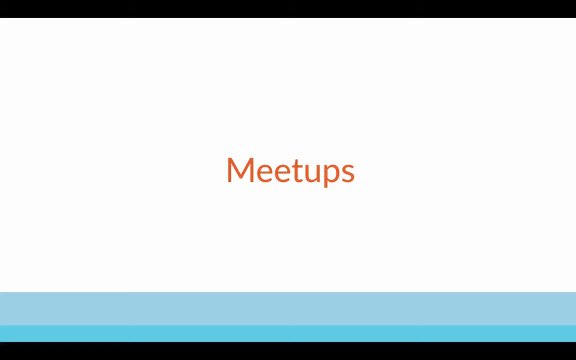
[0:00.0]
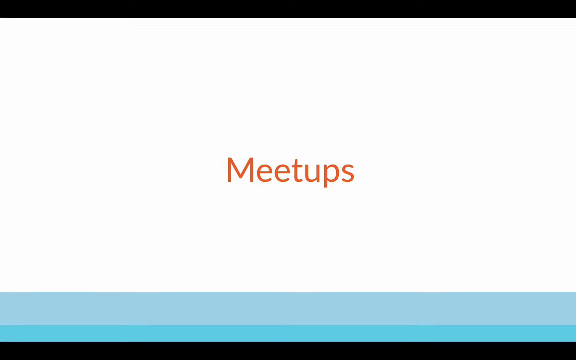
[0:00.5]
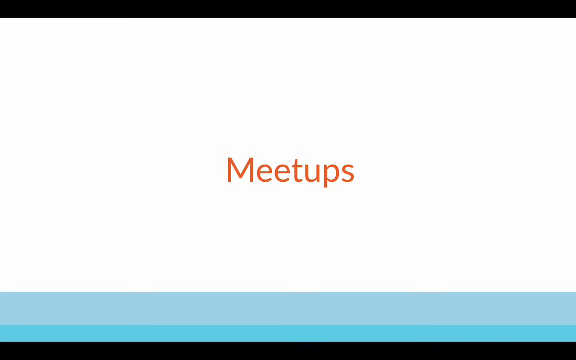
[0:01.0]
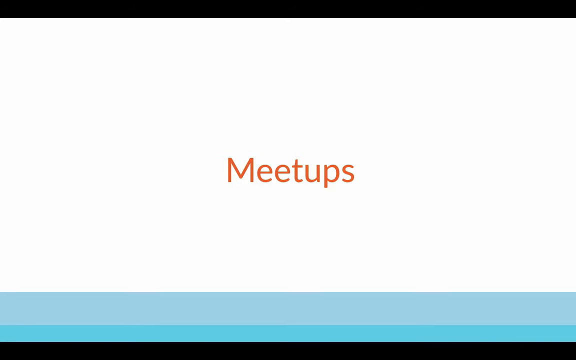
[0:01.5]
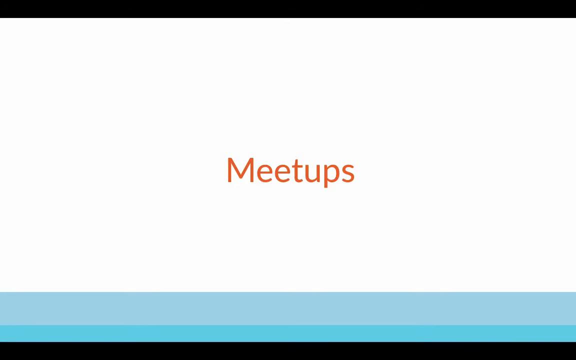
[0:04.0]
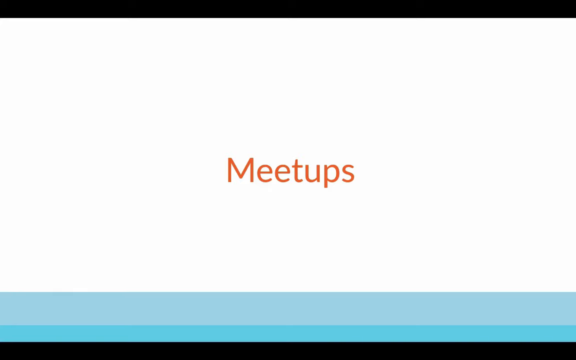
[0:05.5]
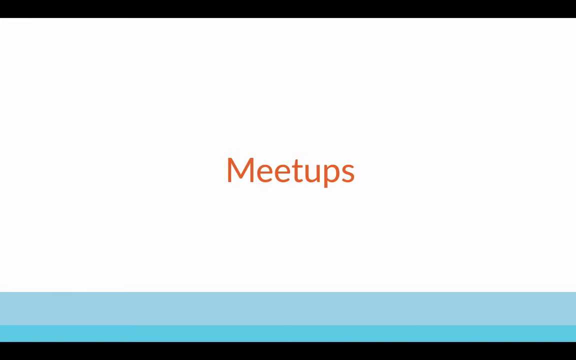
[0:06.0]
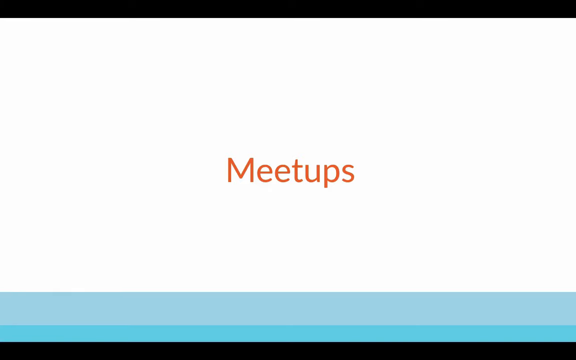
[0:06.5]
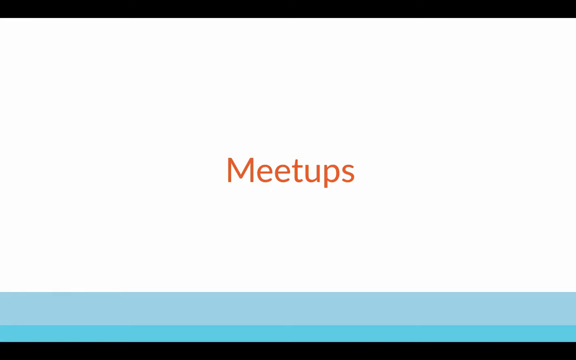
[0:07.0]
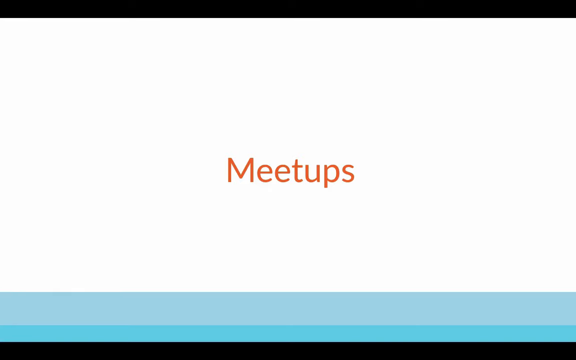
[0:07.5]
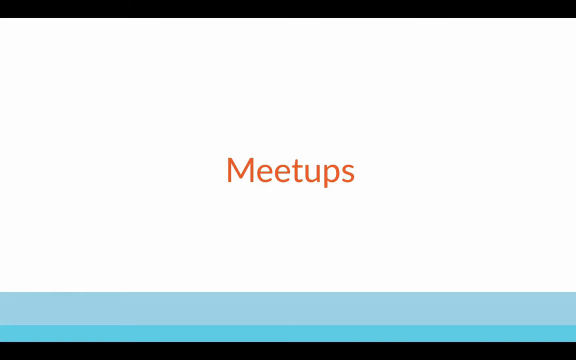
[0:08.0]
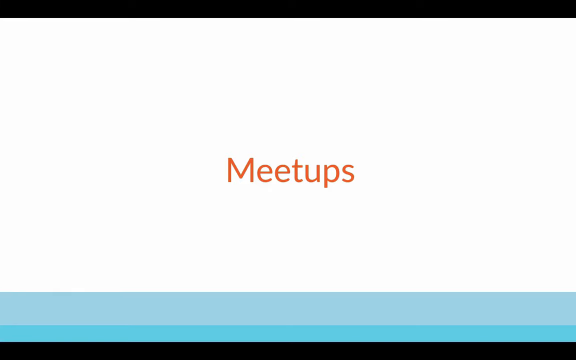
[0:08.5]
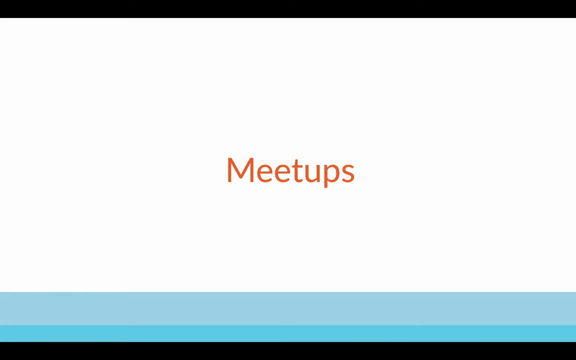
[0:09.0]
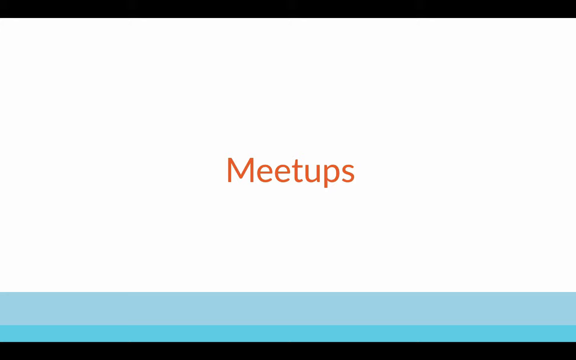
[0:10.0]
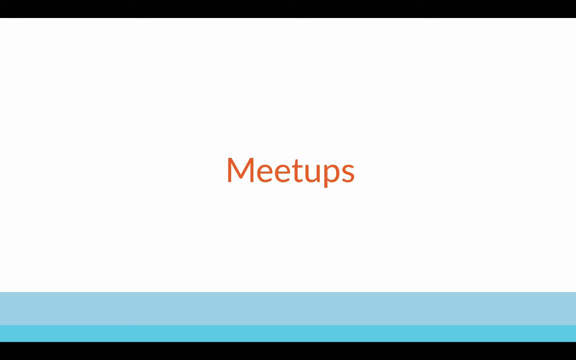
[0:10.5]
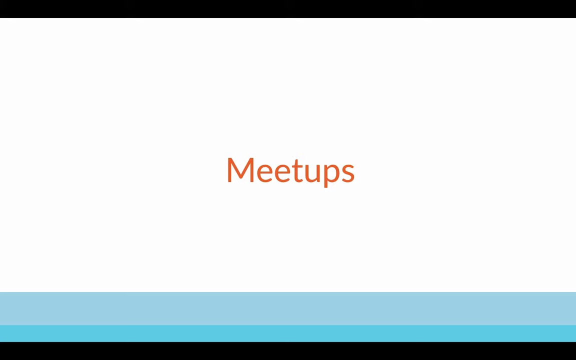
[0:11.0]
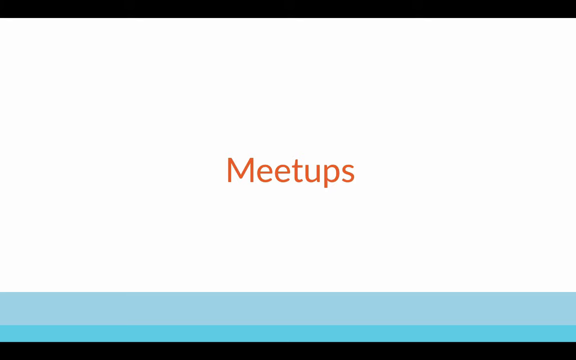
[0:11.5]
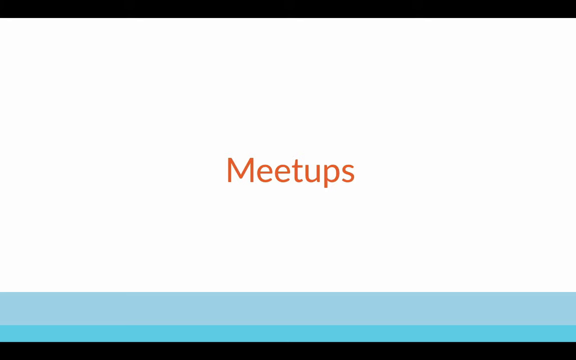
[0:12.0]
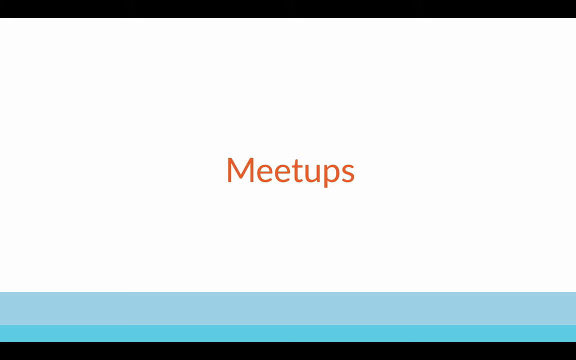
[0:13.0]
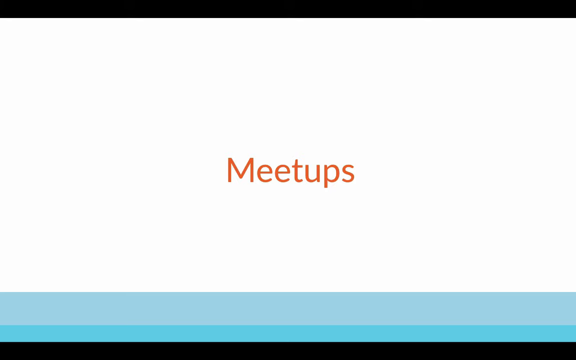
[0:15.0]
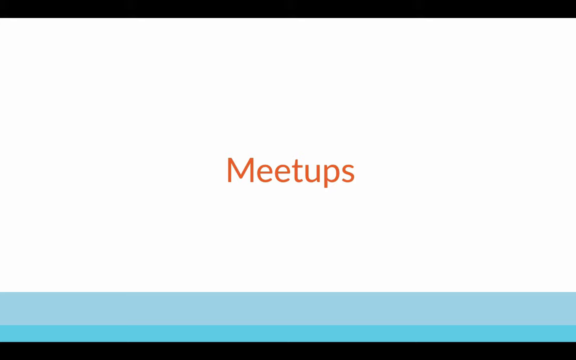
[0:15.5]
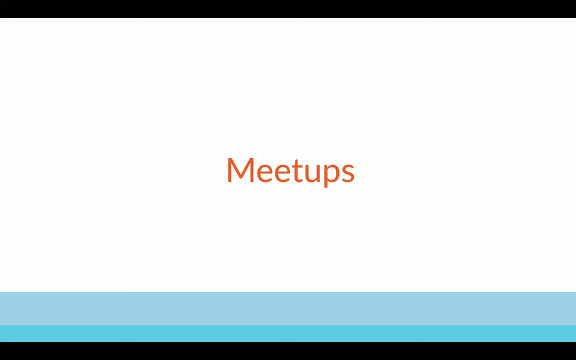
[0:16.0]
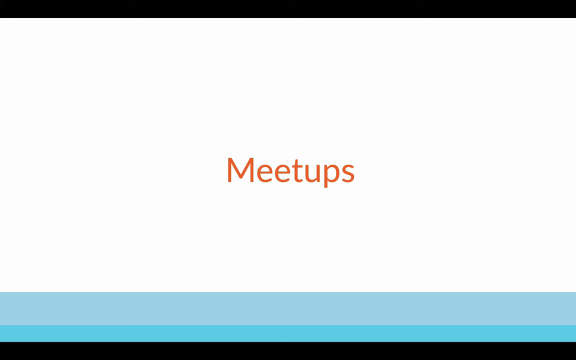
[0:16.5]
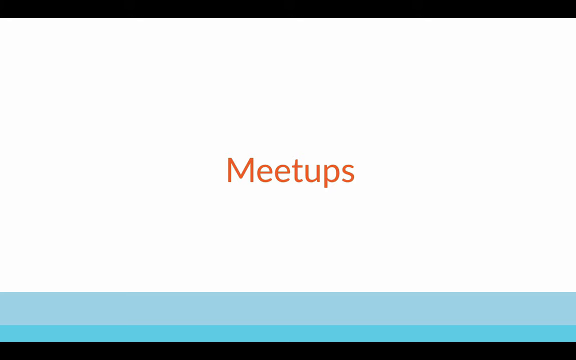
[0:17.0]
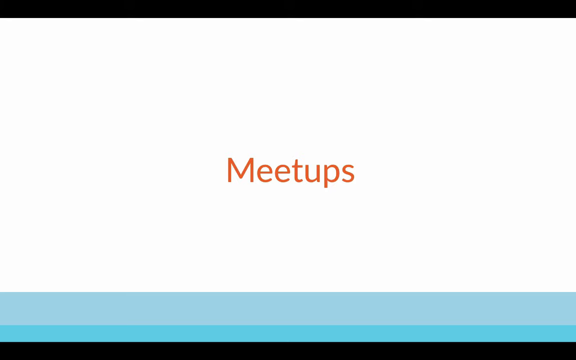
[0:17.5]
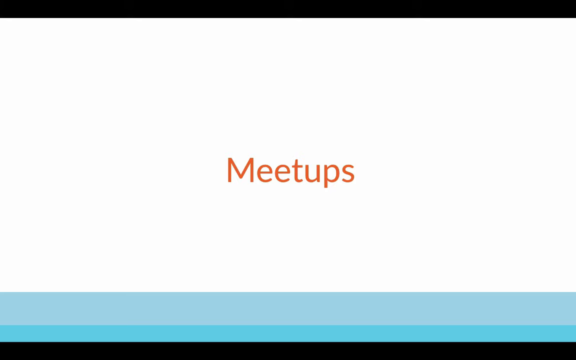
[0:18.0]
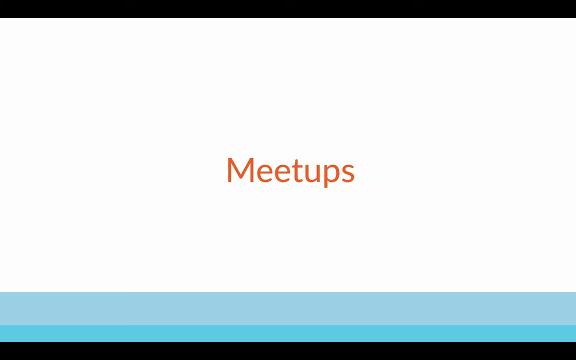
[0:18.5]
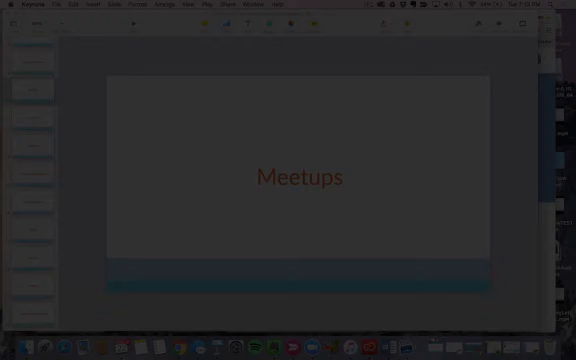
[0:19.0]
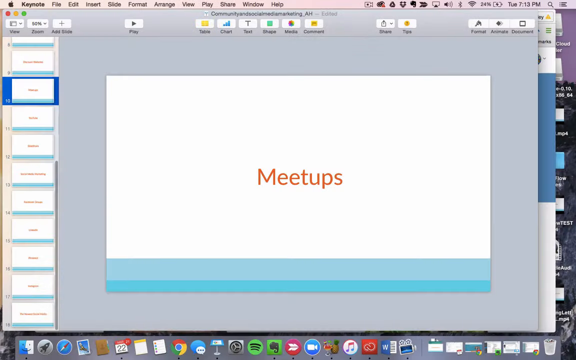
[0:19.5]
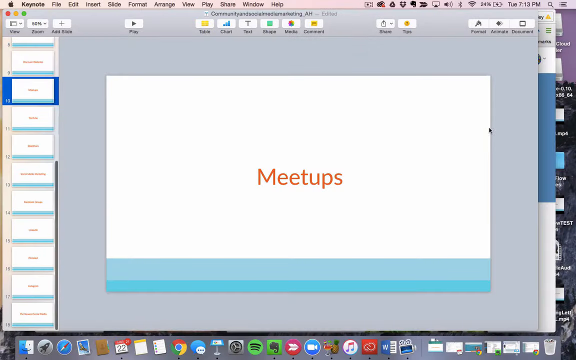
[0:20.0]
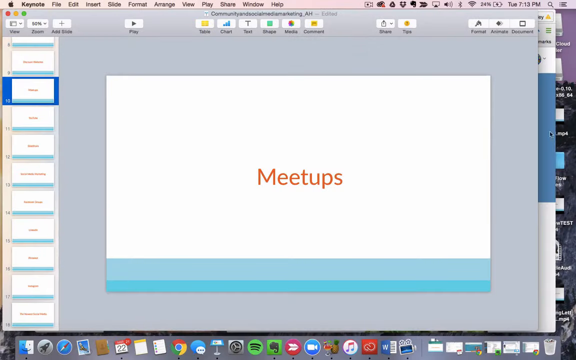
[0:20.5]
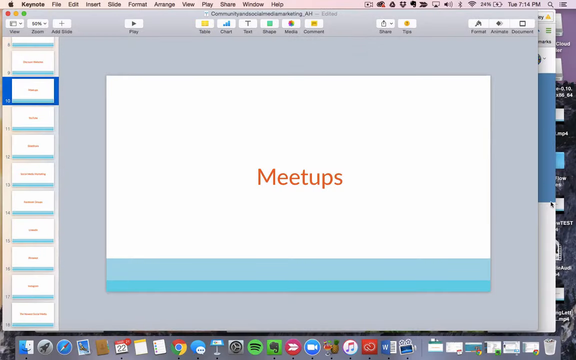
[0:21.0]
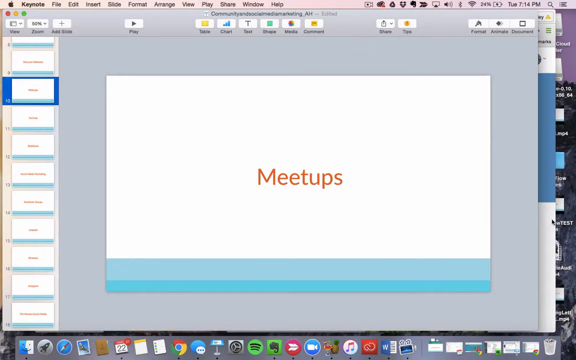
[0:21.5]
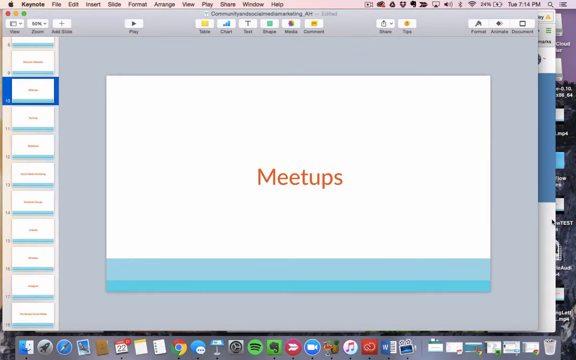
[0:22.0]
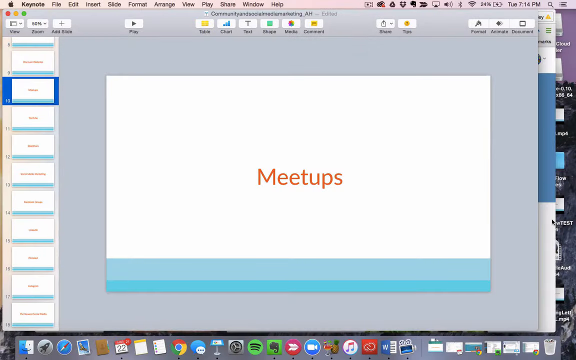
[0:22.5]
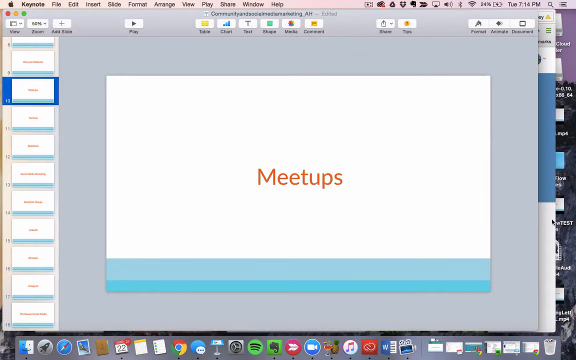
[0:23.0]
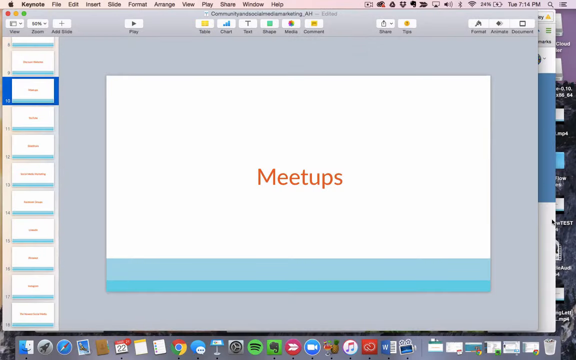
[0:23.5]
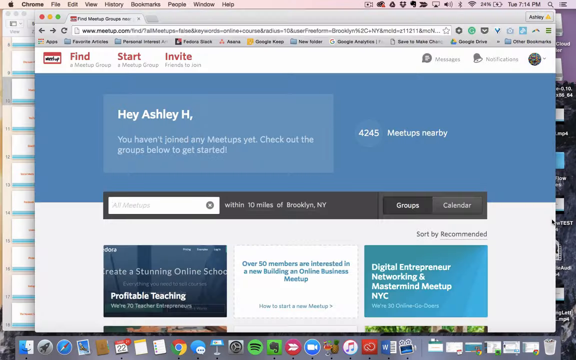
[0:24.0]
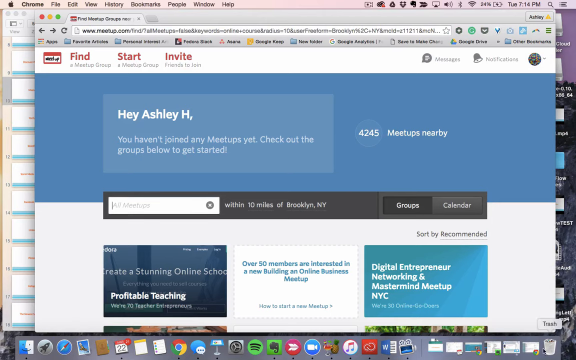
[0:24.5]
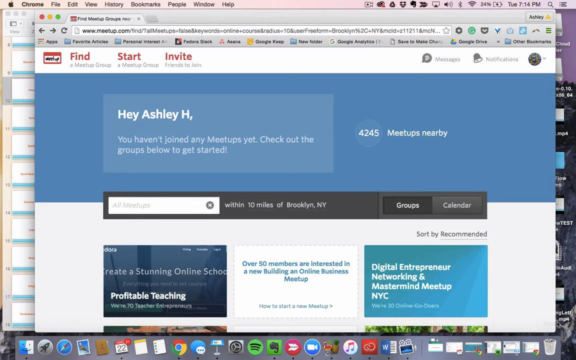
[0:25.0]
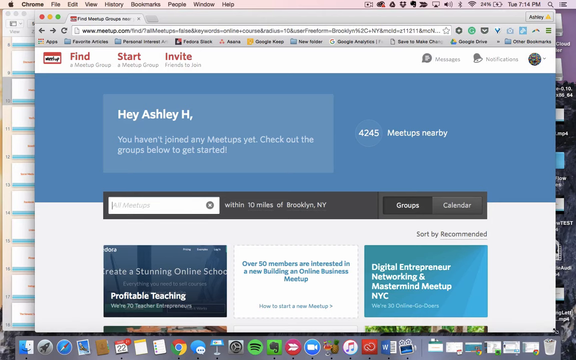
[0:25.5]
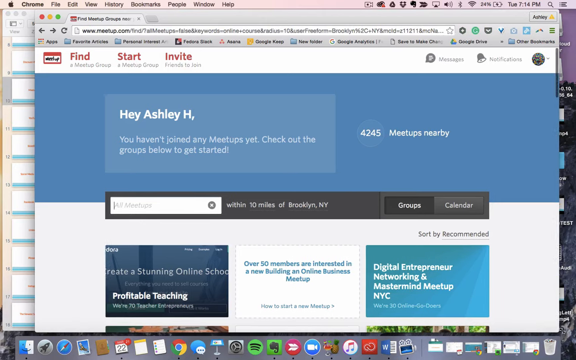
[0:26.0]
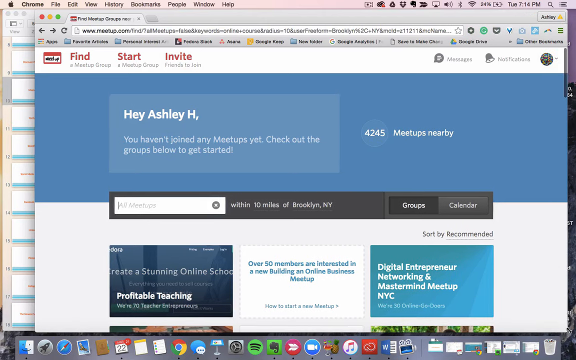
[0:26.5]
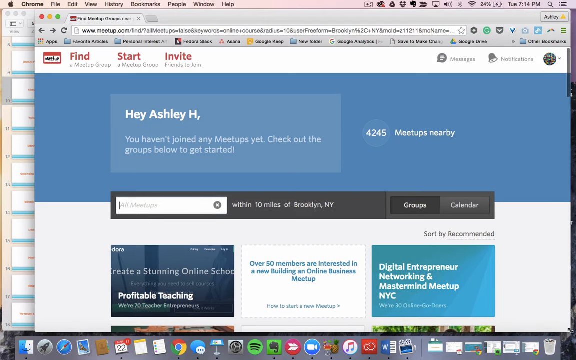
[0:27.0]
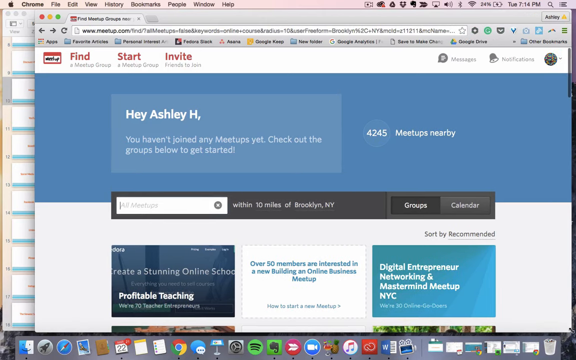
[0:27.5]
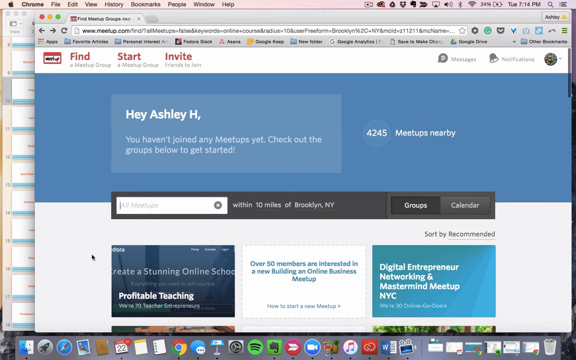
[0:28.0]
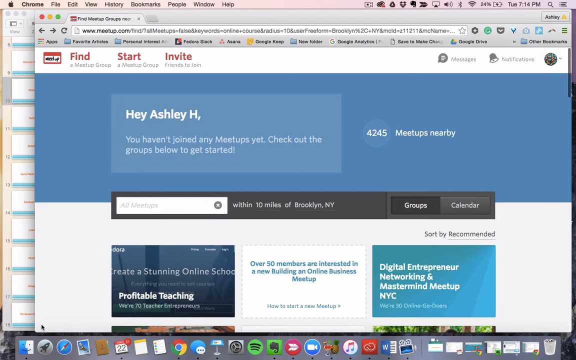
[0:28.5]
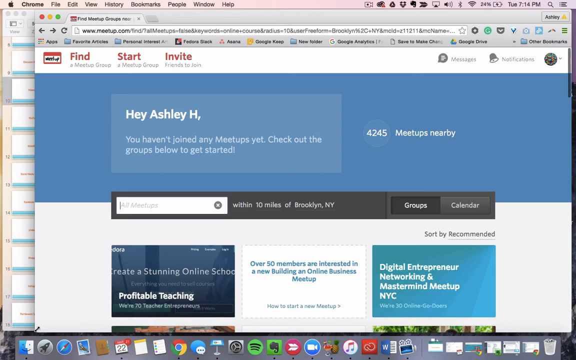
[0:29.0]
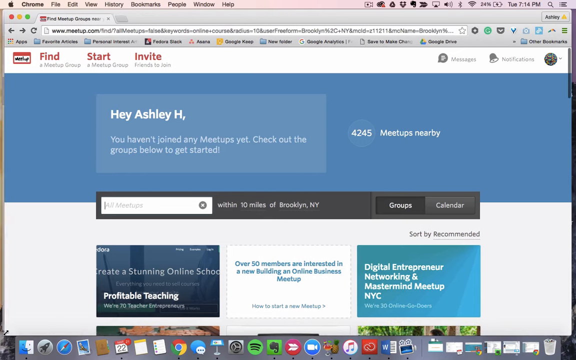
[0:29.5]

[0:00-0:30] The video opens on the word "meetups" written in red in the middle of a completely white text box, spelled M-E-E-T-U-P-S. The camera zooms in, and below it there is a blue line or rectangle of colouring, with one part light blue and the other dark blue. The camera then moves into what appears to be an editing zone, with multiple pages on the left-hand side, different editing options along the top, and a large part of the middle covered in purple. Next a page is shown with "find", "start" and "invite" written on it. Below that it reads "hey Ashley8 you haven't joined any meetups yet check out the groups below to get started", and on the right-hand side it reads "4245 meetups nearby". Different meetup options to join are listed, with profitable teaching shown as number one.